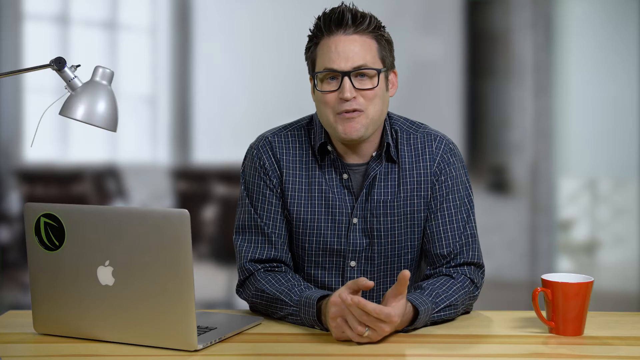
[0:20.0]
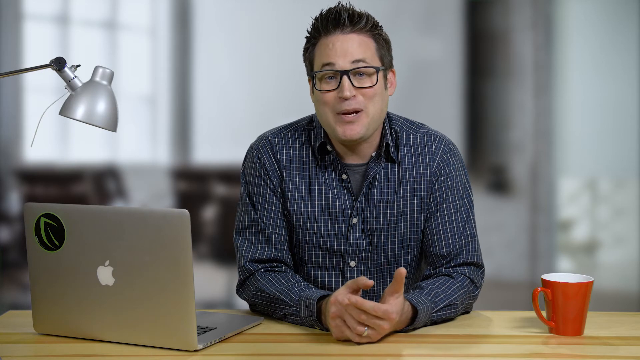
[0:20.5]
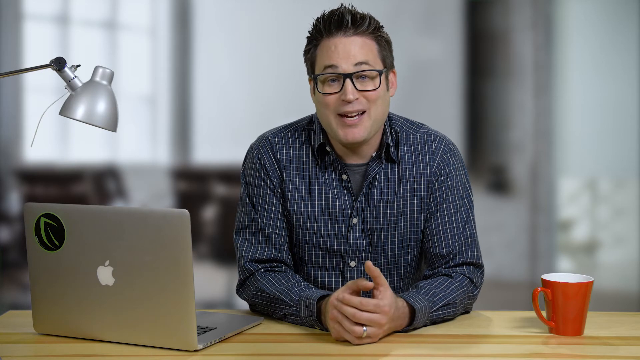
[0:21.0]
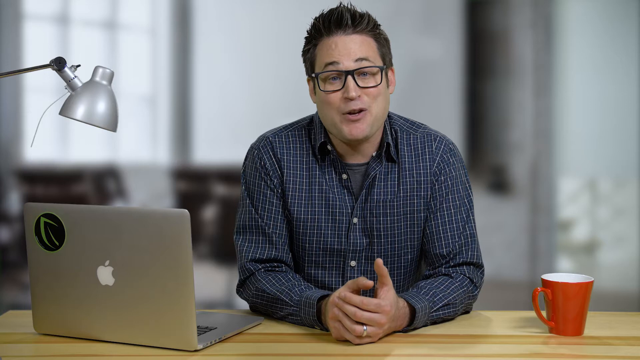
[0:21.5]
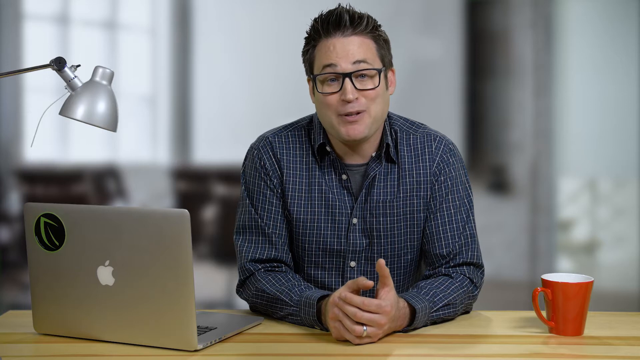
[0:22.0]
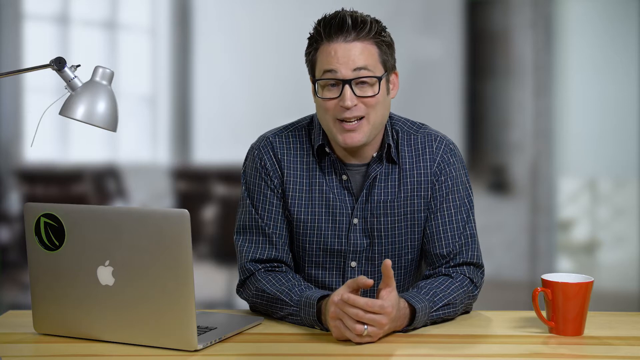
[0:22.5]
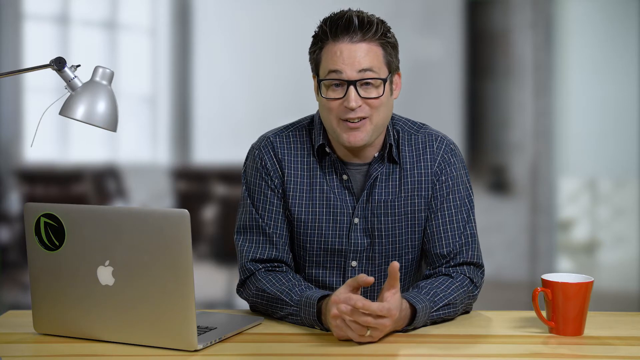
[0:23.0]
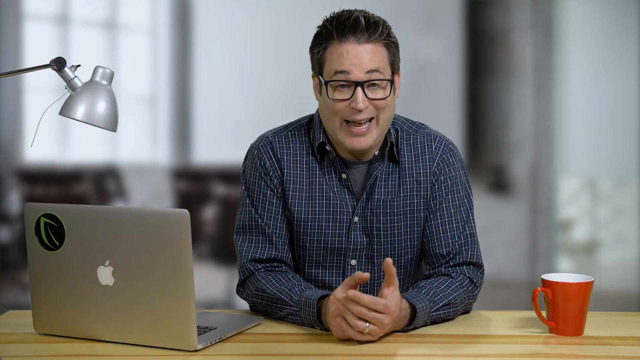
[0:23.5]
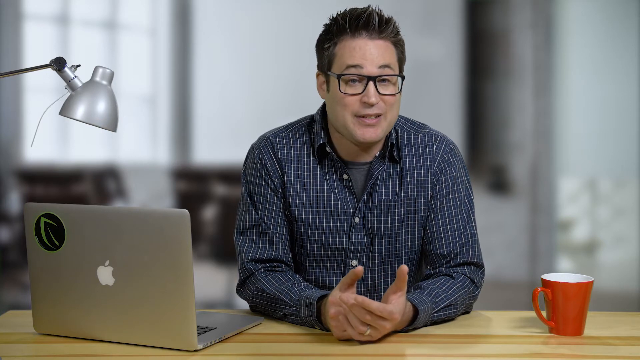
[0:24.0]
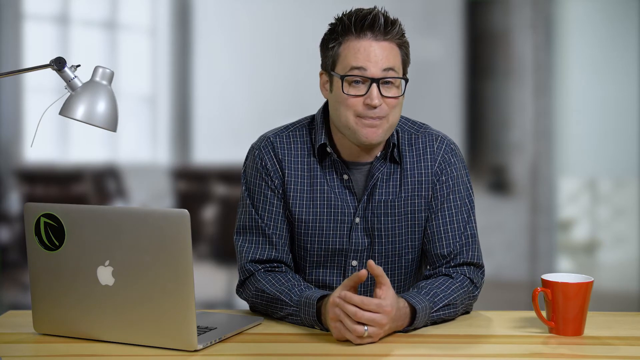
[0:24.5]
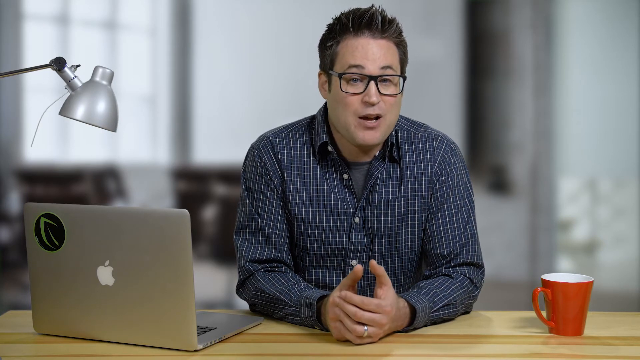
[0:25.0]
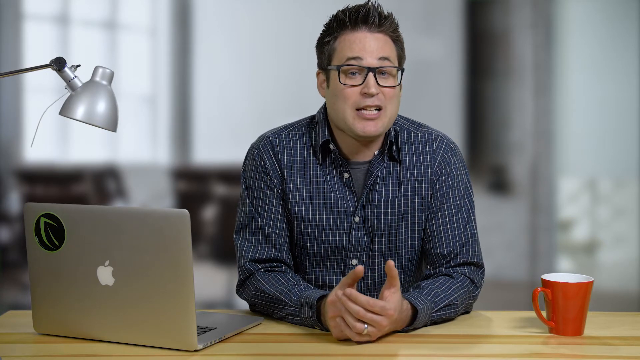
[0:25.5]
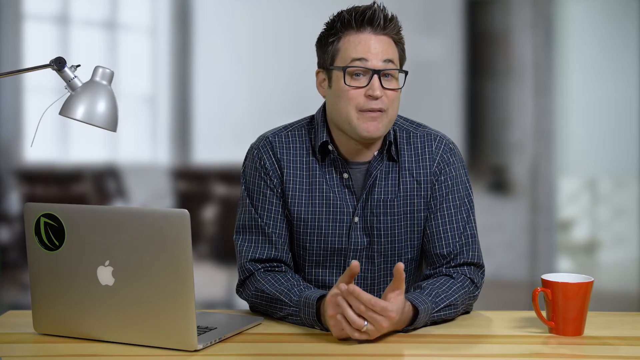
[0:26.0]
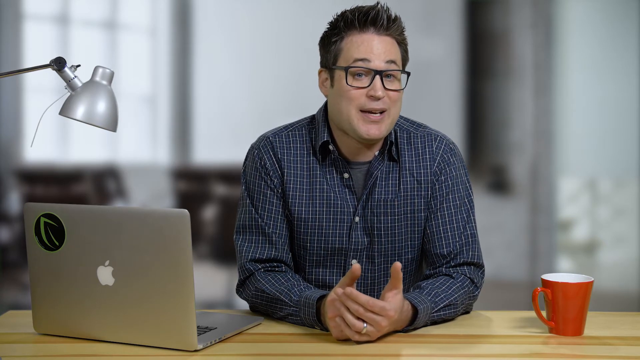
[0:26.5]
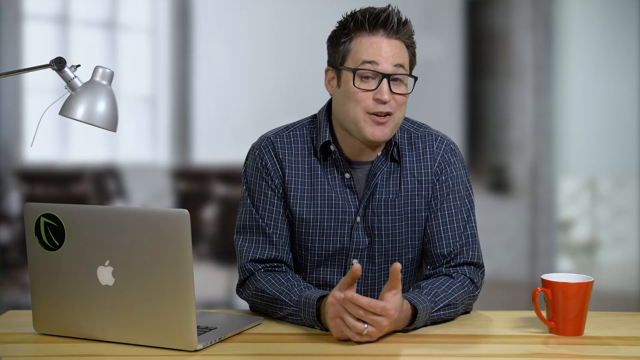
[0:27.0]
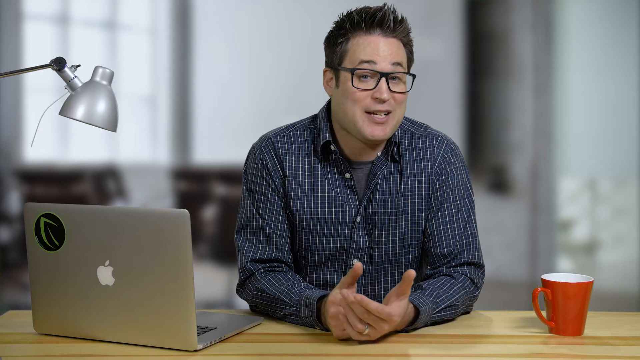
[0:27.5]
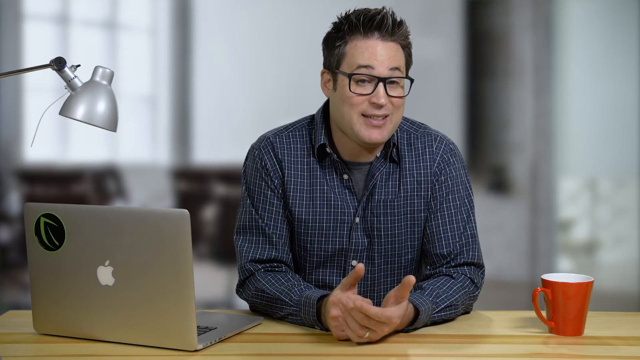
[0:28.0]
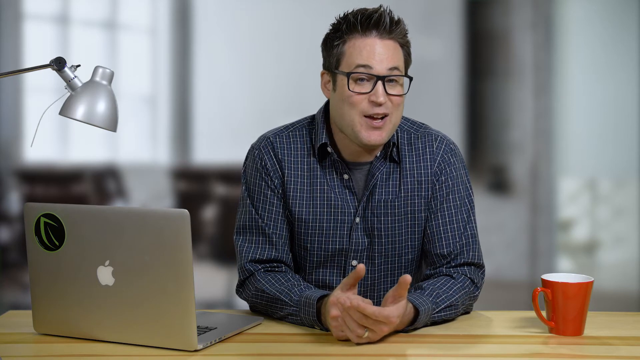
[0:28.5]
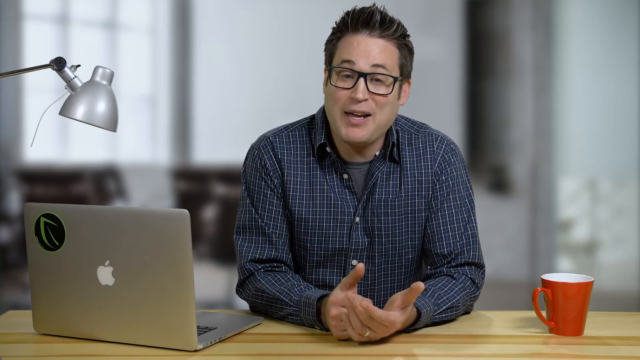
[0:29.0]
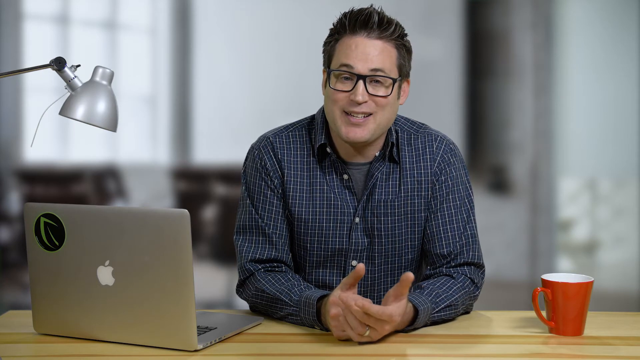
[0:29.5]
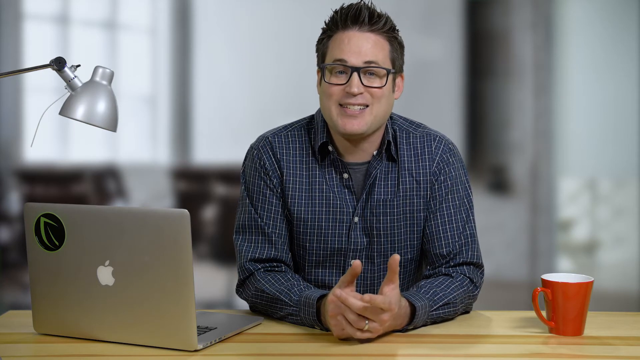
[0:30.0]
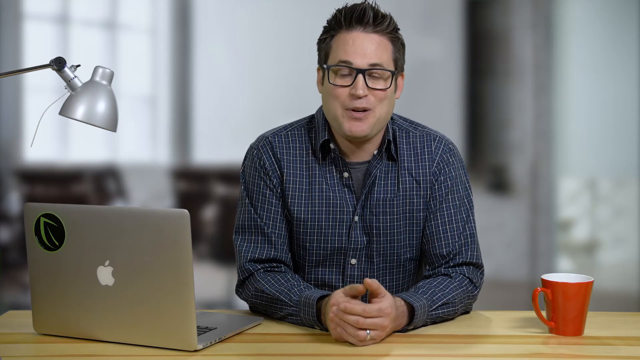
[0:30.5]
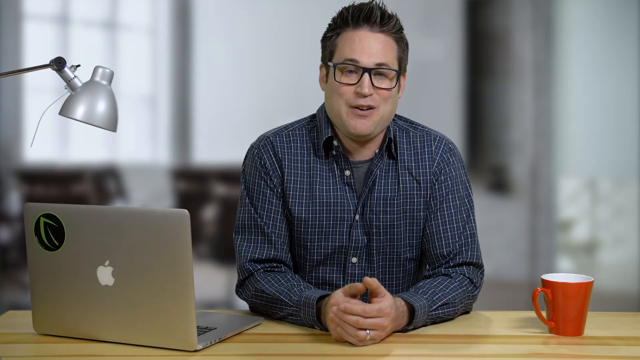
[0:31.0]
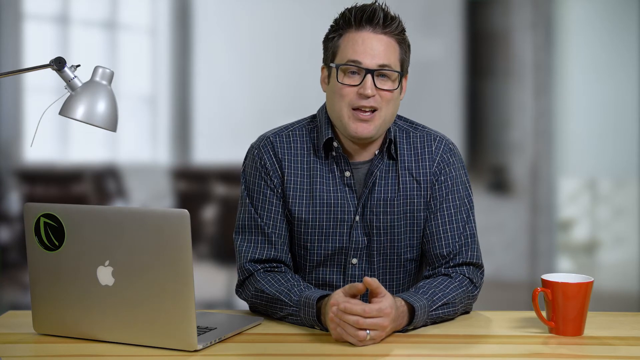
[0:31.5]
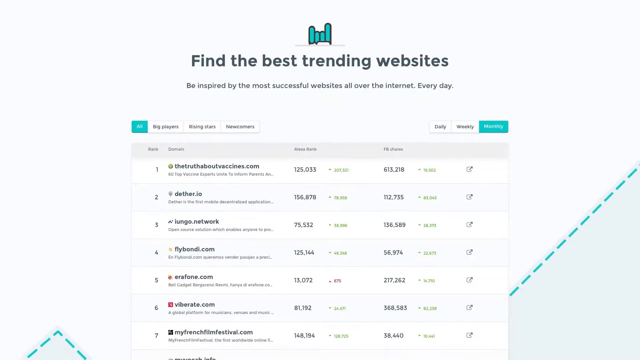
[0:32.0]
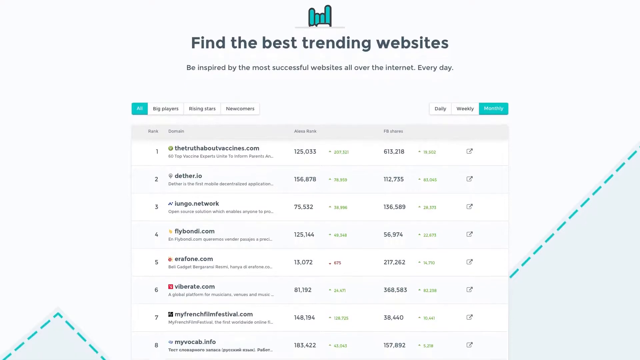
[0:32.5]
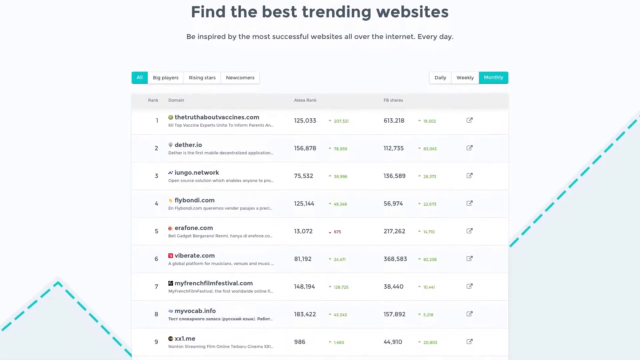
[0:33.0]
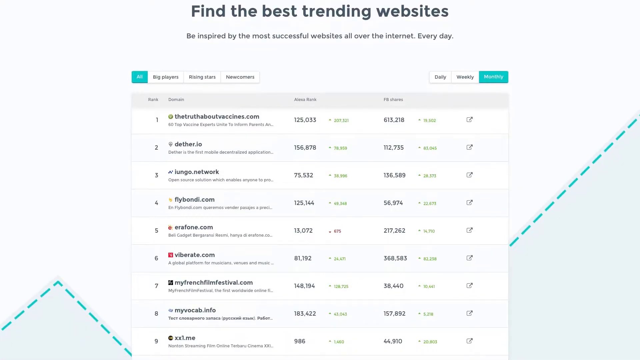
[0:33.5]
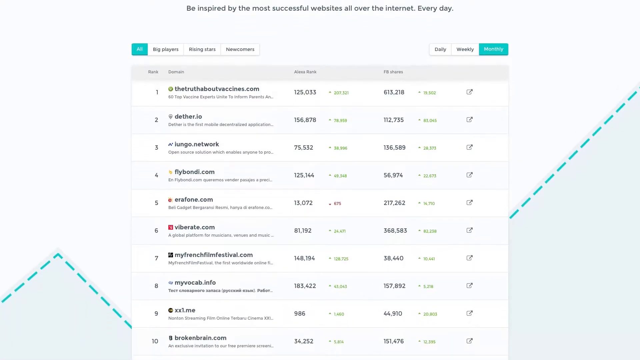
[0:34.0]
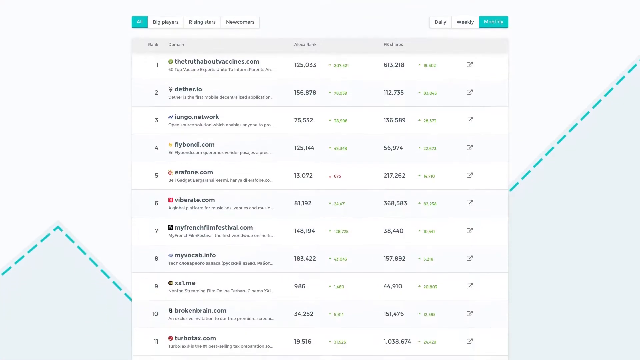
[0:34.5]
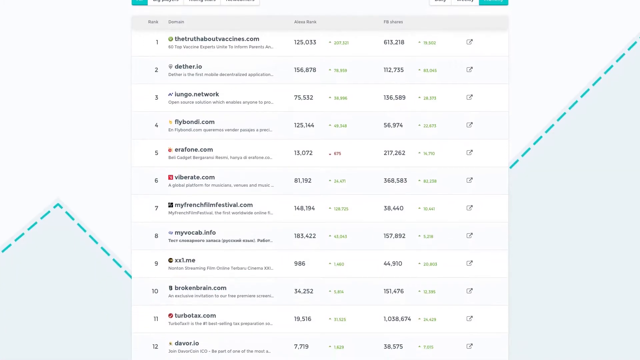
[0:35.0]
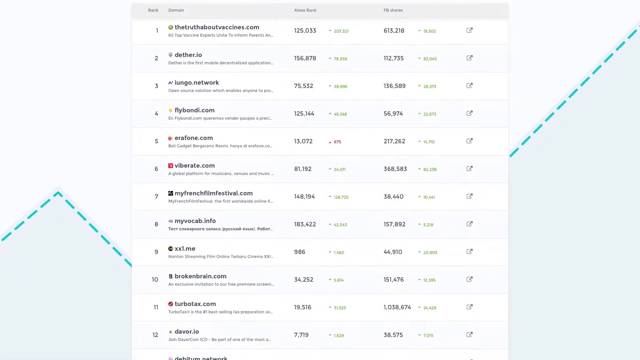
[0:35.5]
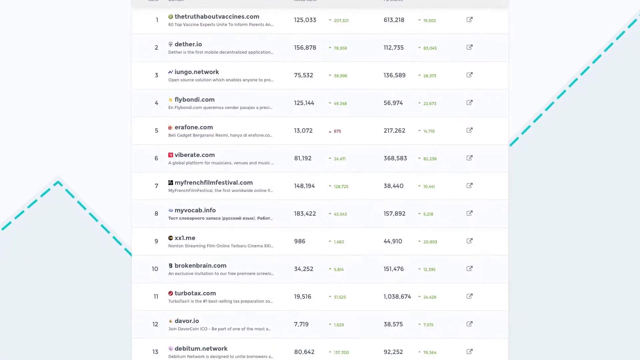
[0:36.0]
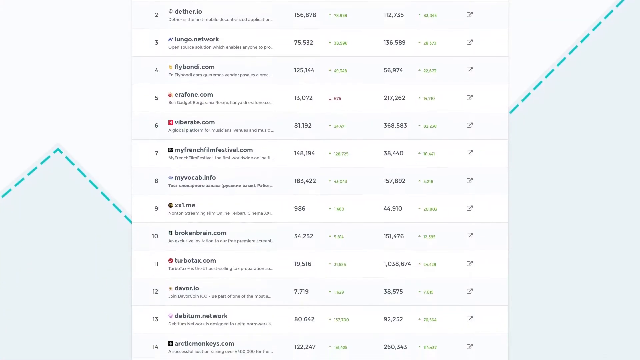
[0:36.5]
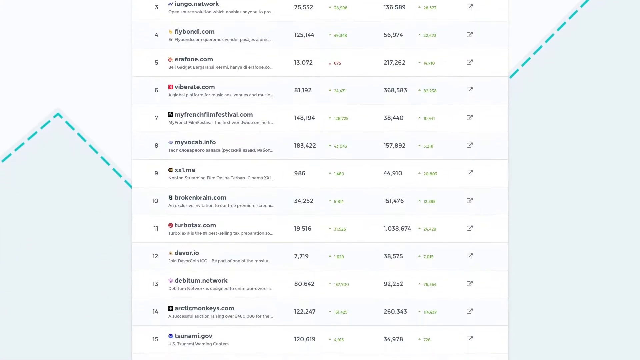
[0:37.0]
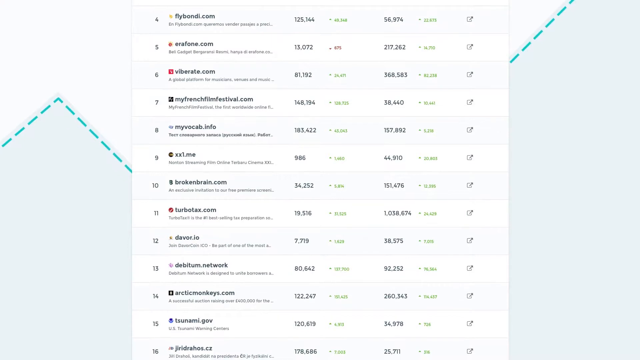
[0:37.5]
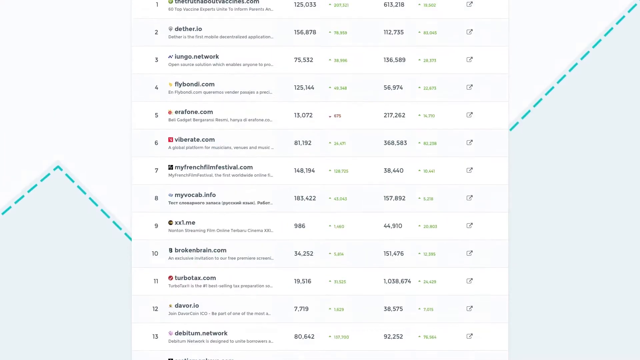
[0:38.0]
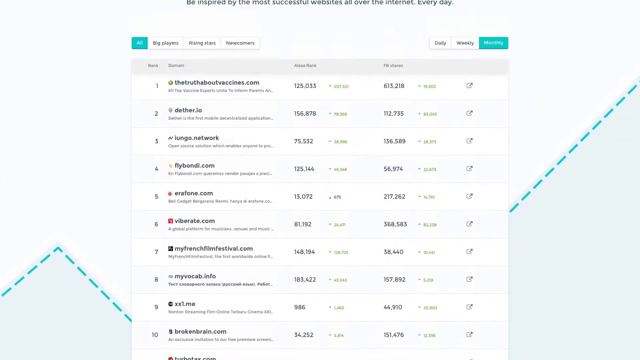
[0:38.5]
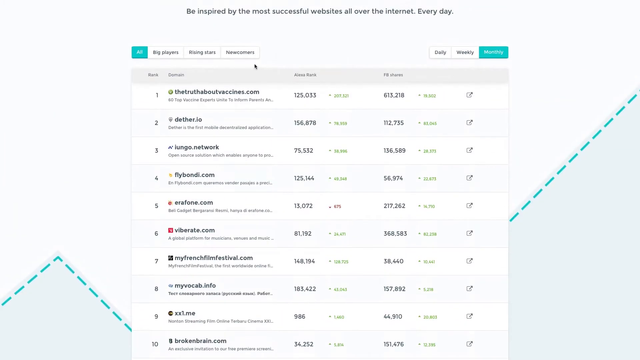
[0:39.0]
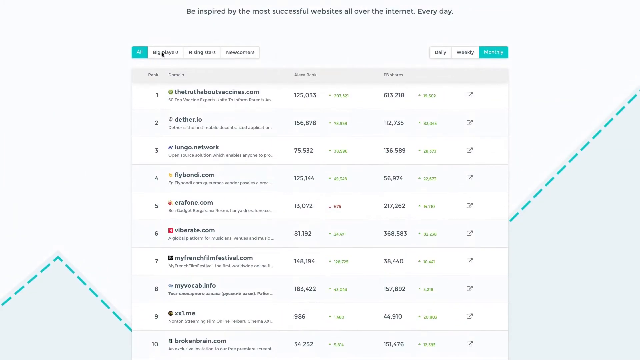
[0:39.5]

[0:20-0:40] The man in the home office setting, with a computer and the mug, talks casually into the camera, apparently giving a quick review and summary of the website. The video transitions to the website, showing the sites it lists along with their traffic, visits and views. Different categories are visible, including big players, rising stars and owners, and there are weekly, daily and monthly trending websites. The video then transitions back to the man talking casually to the camera in the home office setting.